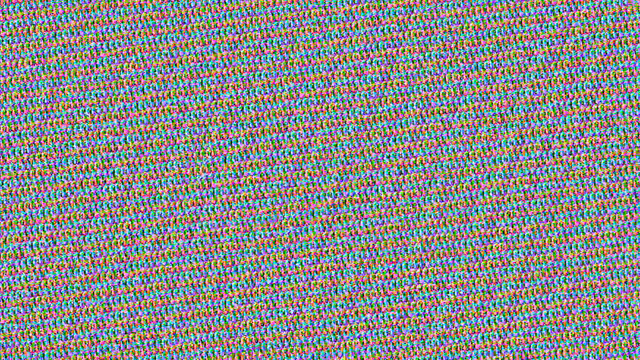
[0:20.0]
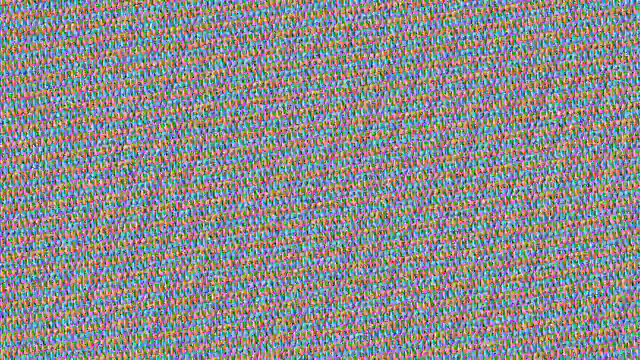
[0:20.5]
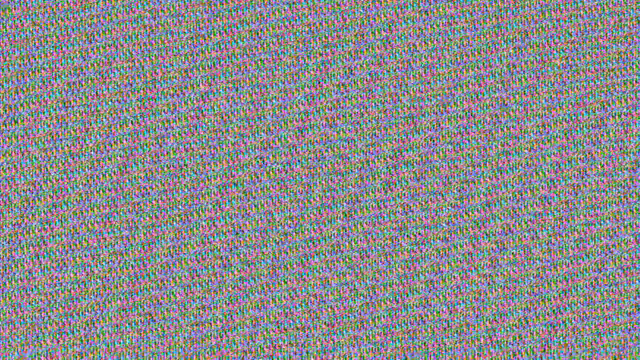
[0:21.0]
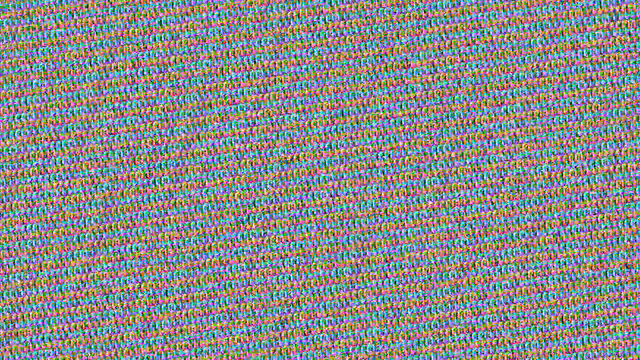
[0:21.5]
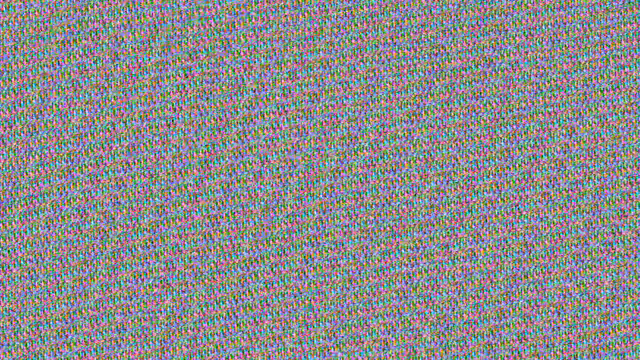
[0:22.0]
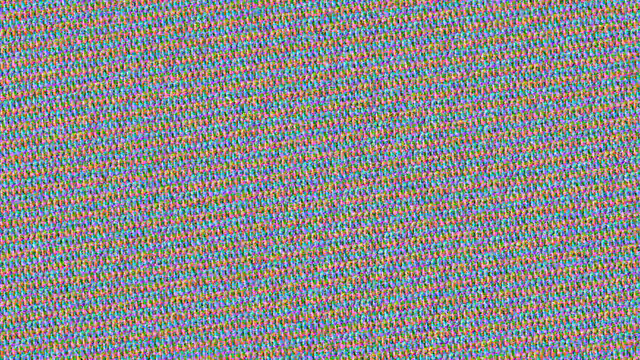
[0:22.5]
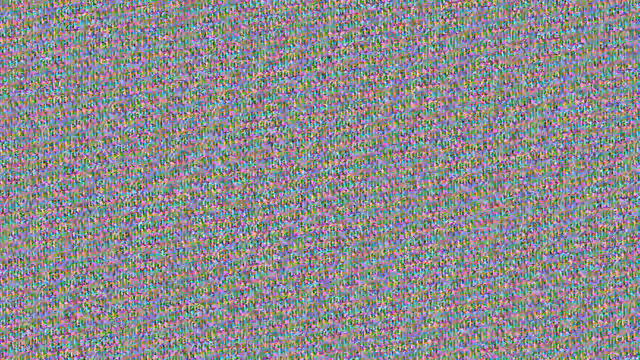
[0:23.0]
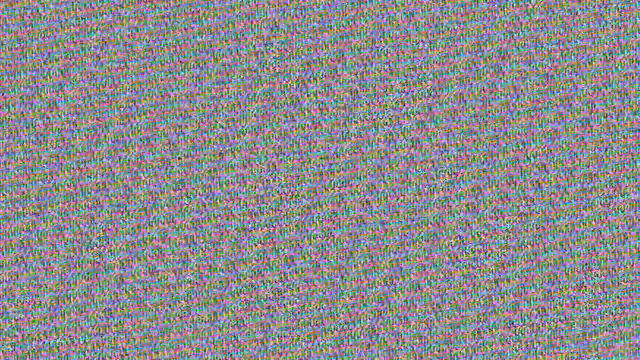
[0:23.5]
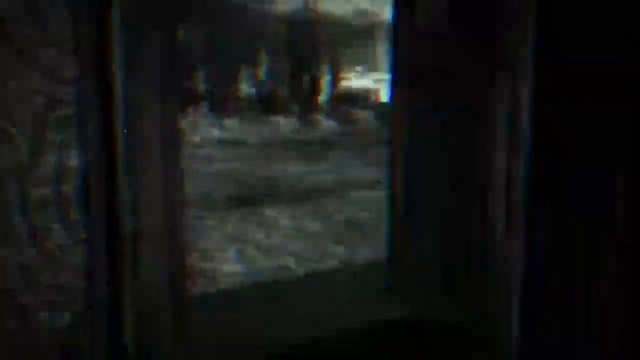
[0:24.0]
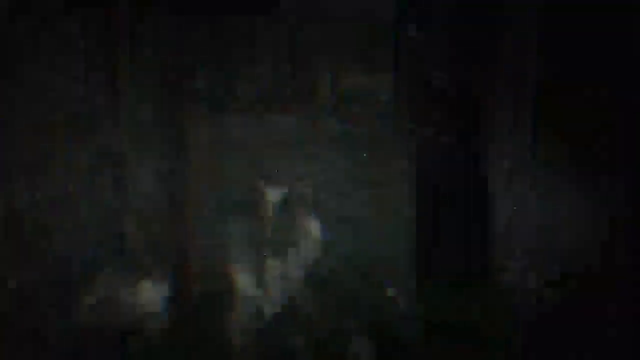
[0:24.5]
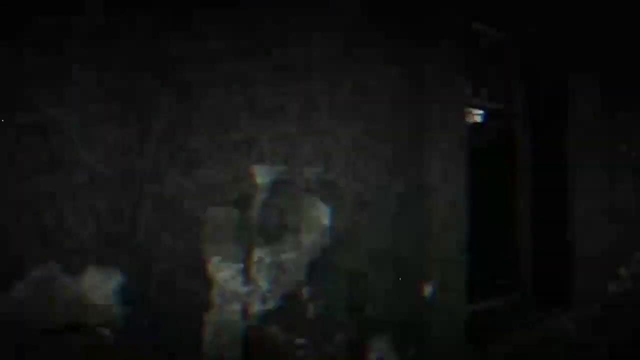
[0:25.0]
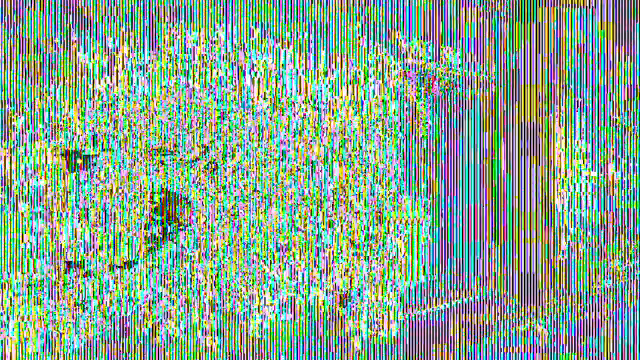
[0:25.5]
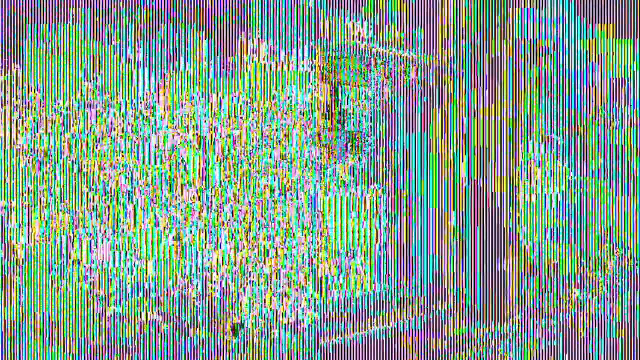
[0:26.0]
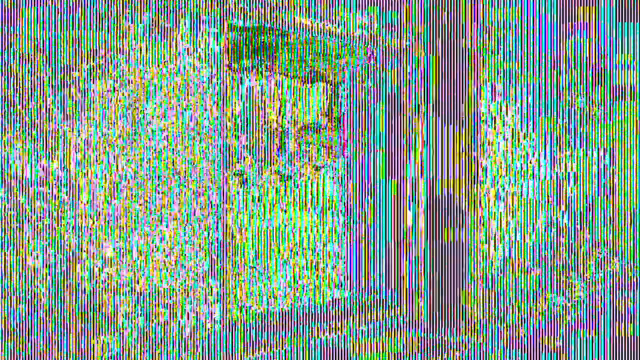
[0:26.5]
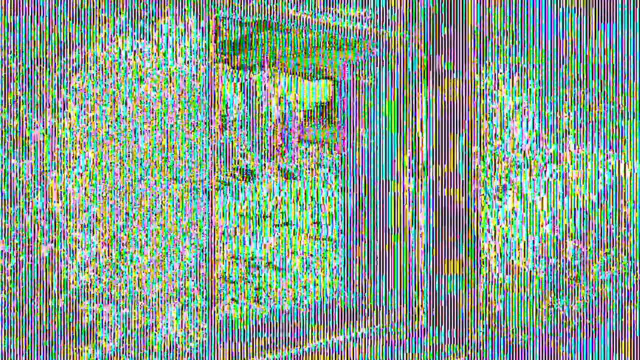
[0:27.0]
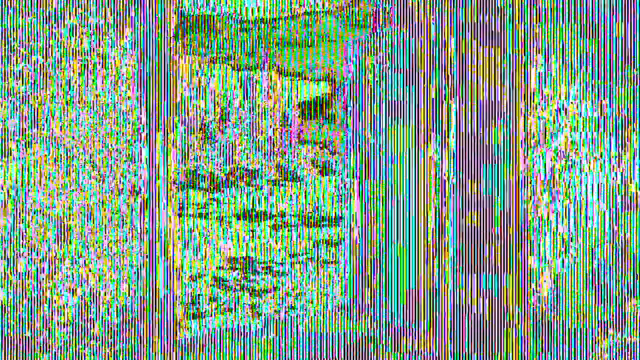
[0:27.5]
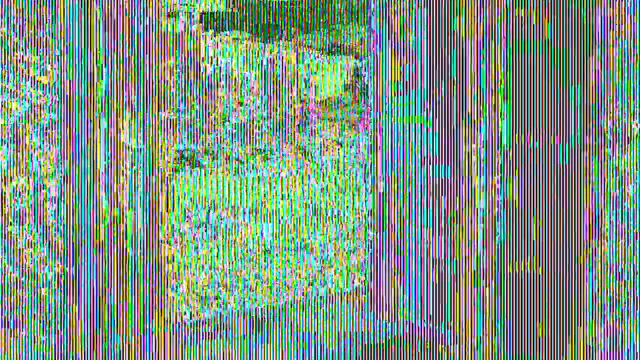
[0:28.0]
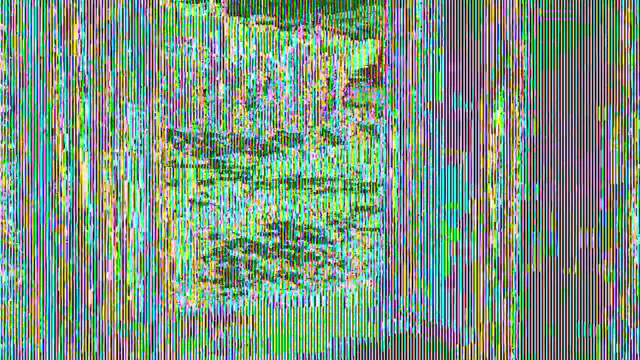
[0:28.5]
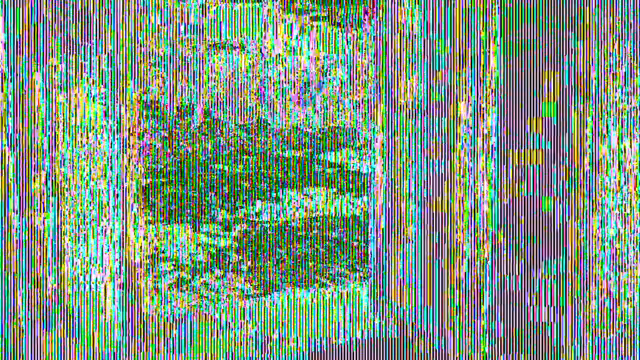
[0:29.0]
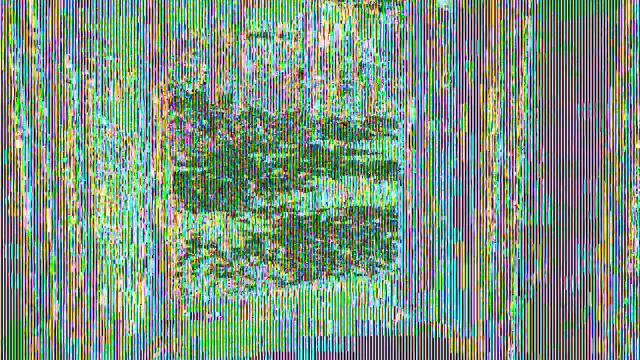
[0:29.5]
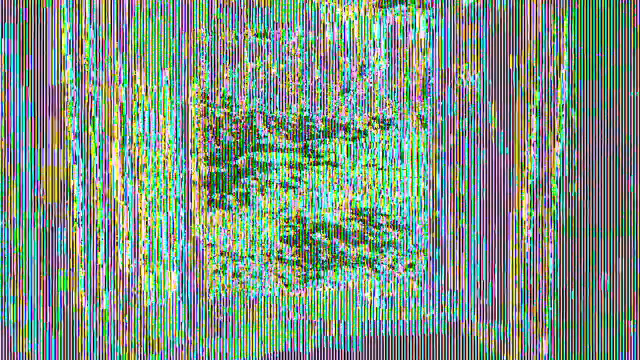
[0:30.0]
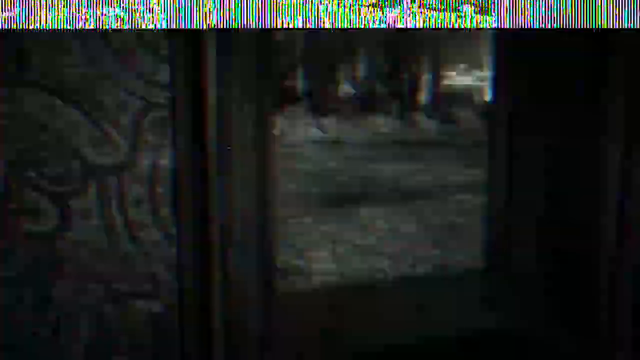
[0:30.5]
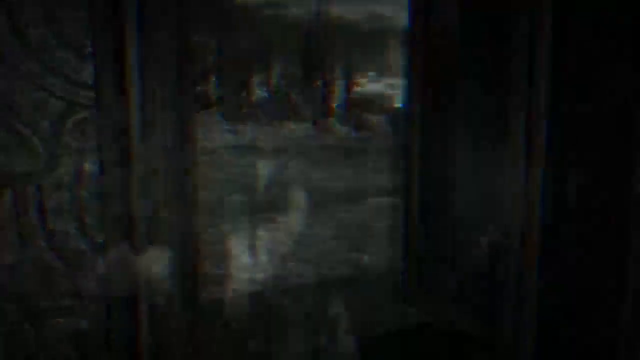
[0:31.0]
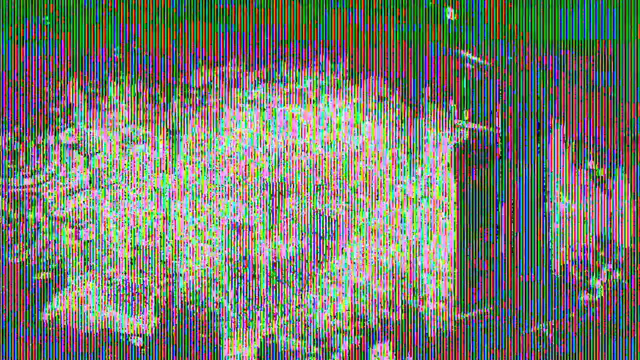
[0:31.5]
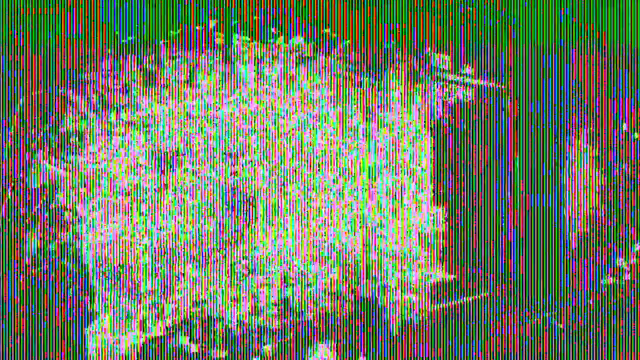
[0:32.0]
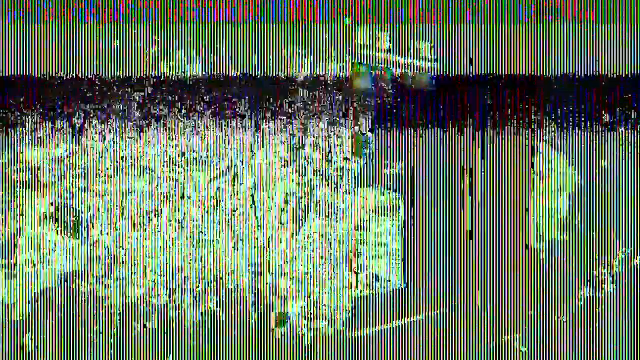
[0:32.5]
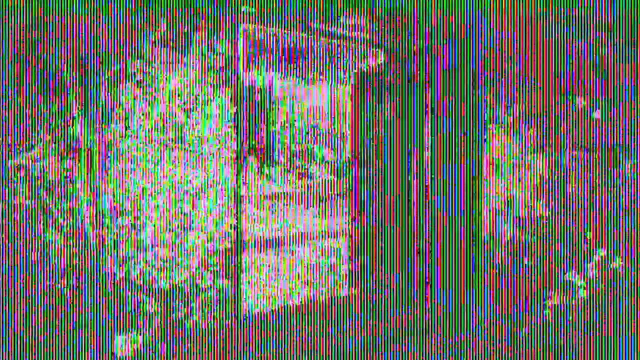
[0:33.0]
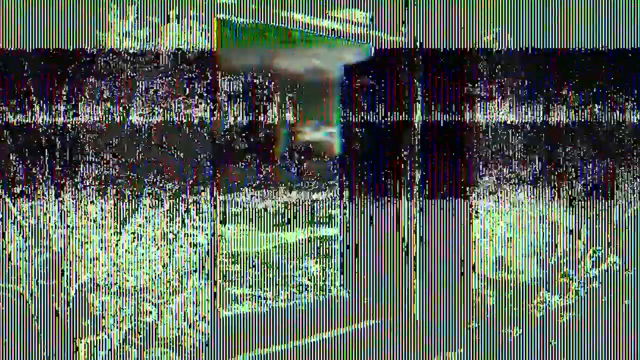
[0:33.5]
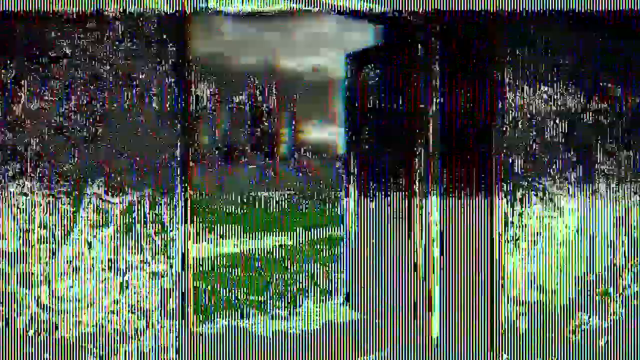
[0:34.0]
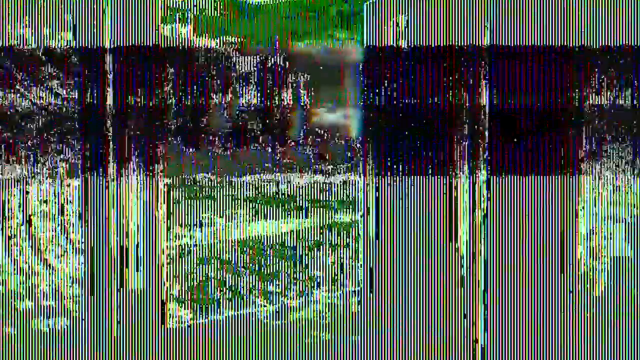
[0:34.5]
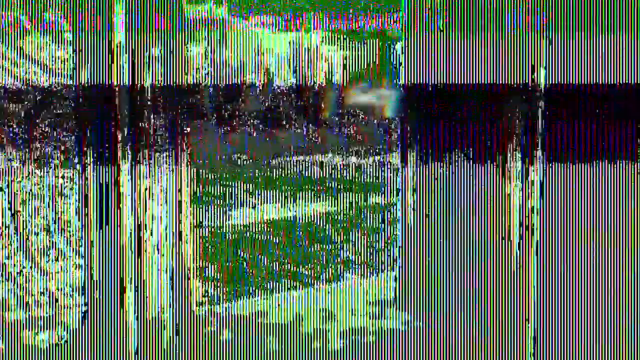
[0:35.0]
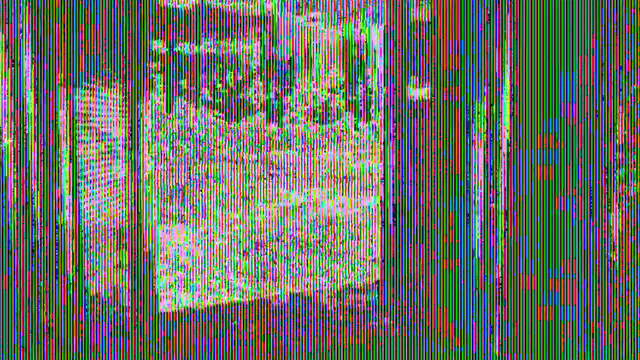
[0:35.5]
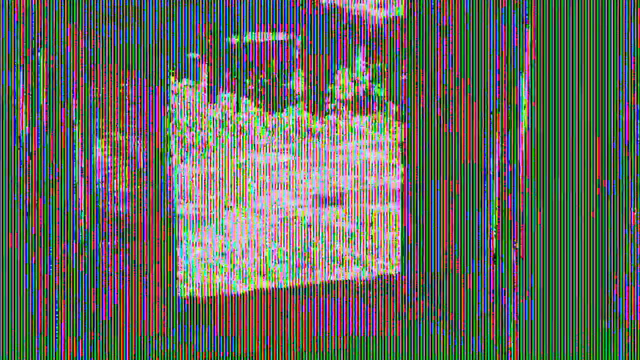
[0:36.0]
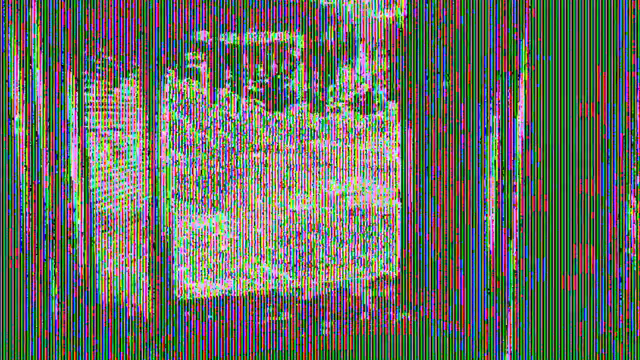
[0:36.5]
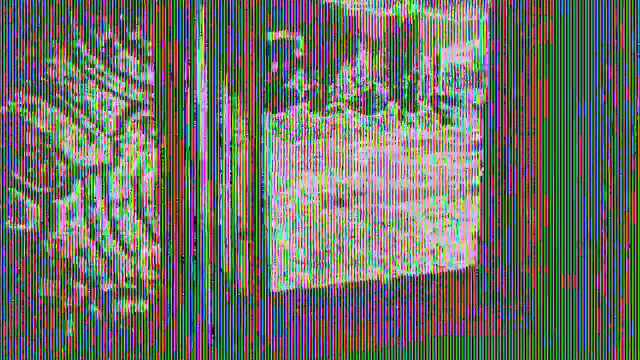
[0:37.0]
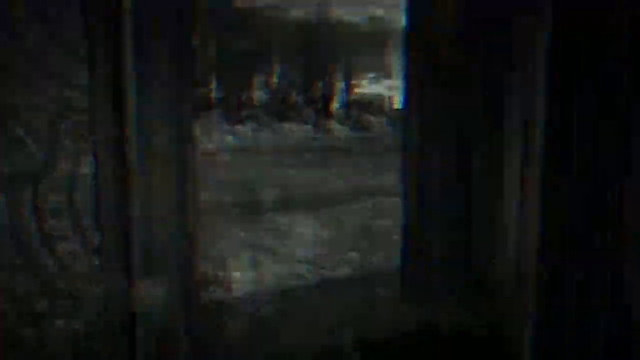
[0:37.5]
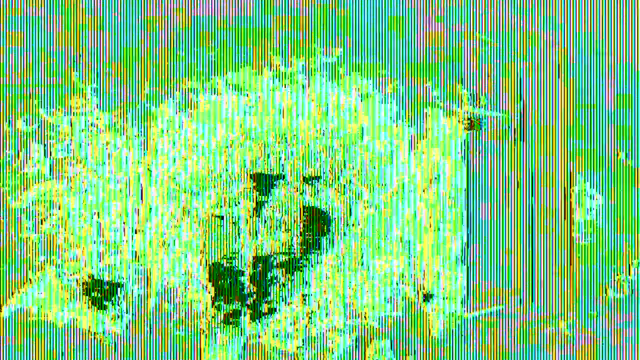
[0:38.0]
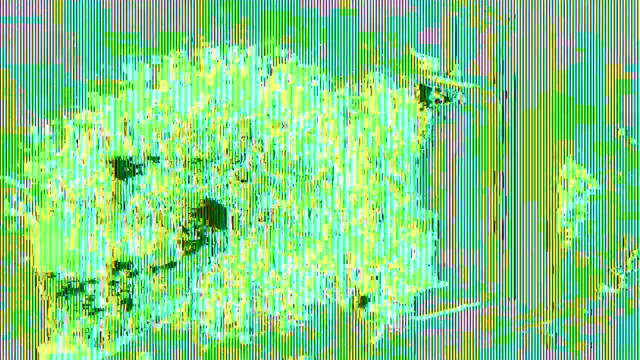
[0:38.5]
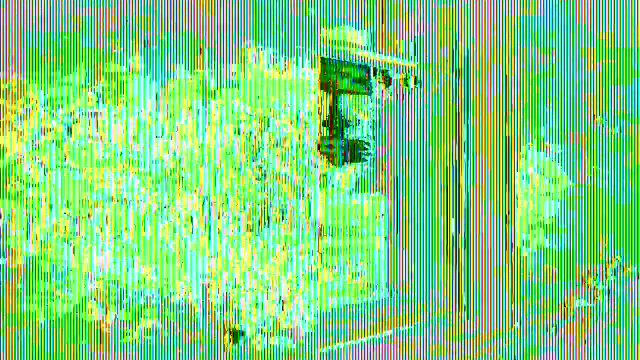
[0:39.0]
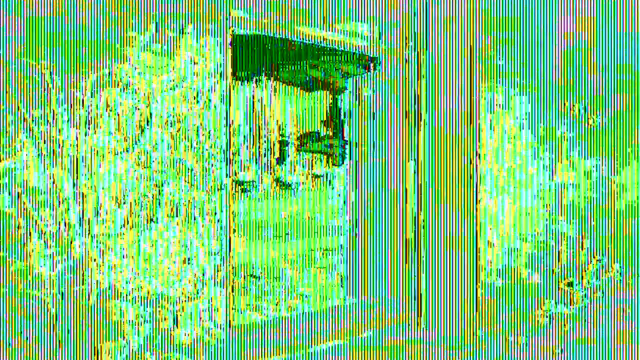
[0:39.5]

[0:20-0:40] The shot begins with static like that seen on old televisions when the aerial lost signal, then jumps to black-and-white footage of someone looking through the window frame of a house to the outside. The footage continues but is interspersed with static, so the shapes of everything are all in static, with only outlines visible. It alternates between the actual footage and the static in a predominantly green and pink hue. It looks like either something from a horror movie or someone taking a home video with a handheld camera. The quality is exceptionally bad. No people are visible, and nothing particularly happens other than the camera moving through the house to look out through a window.